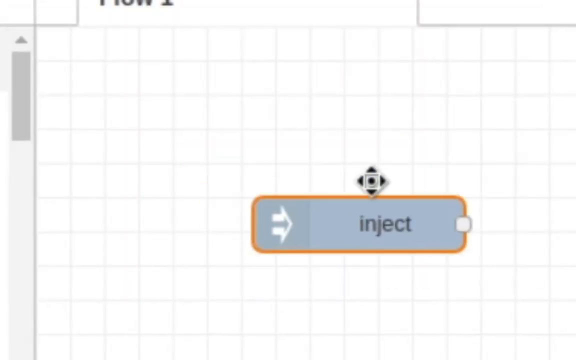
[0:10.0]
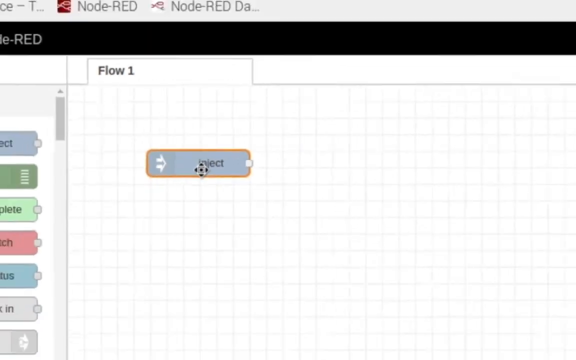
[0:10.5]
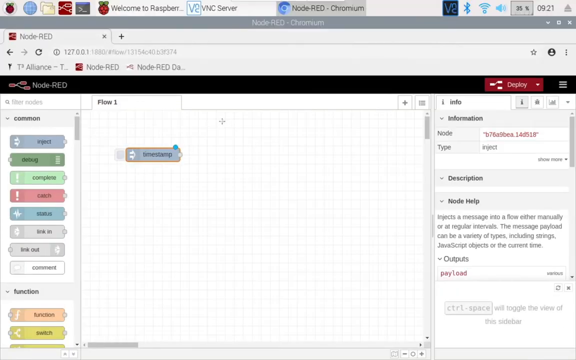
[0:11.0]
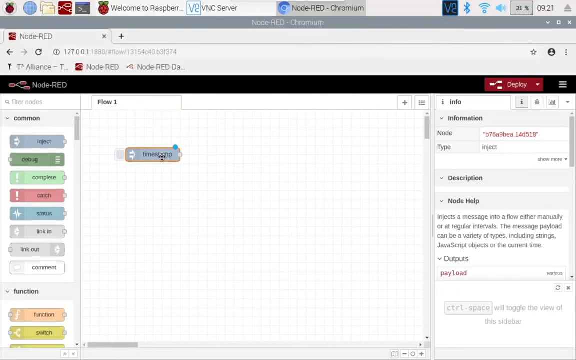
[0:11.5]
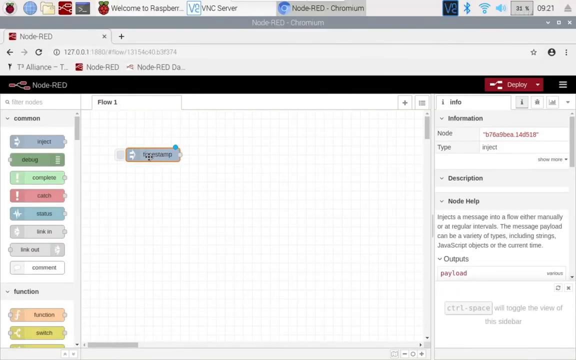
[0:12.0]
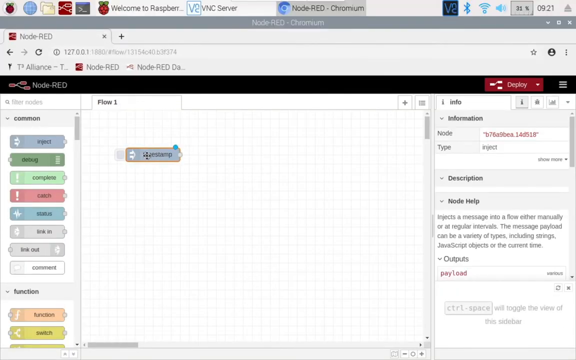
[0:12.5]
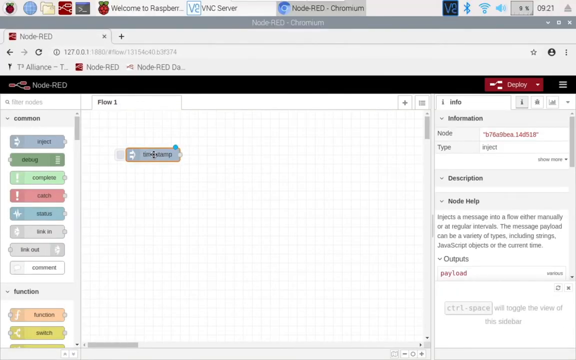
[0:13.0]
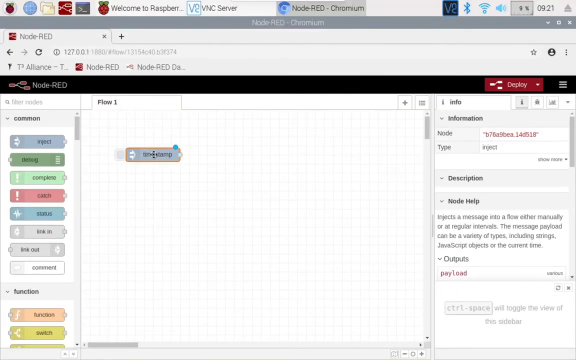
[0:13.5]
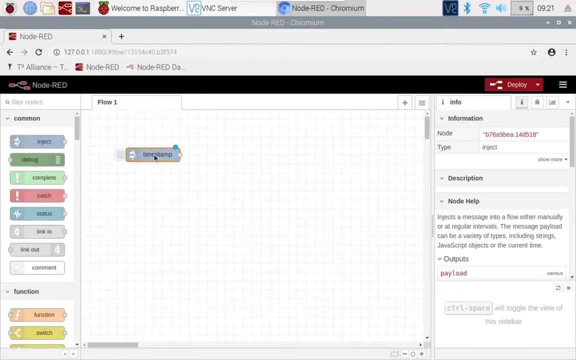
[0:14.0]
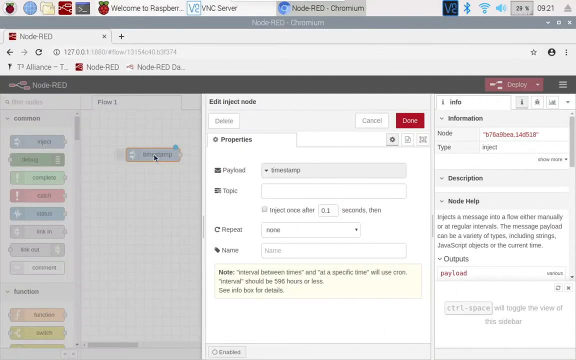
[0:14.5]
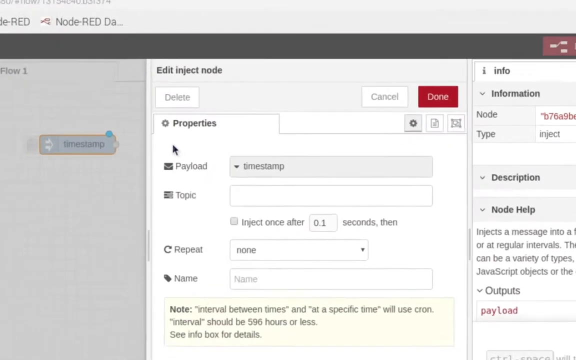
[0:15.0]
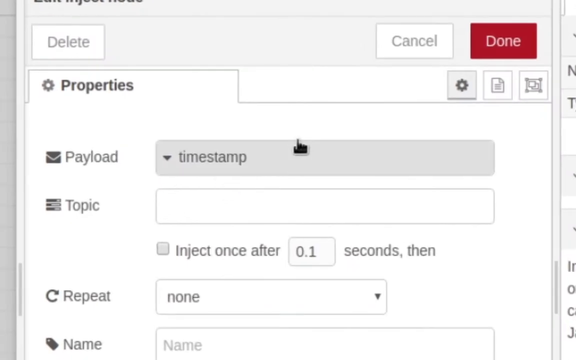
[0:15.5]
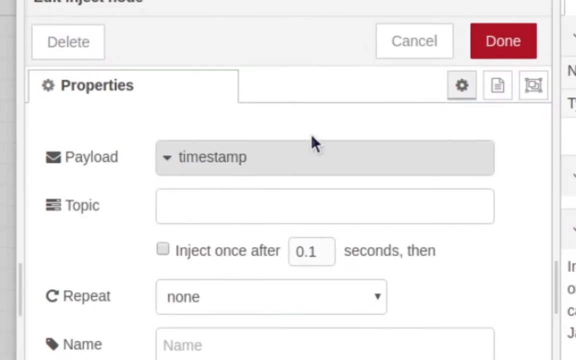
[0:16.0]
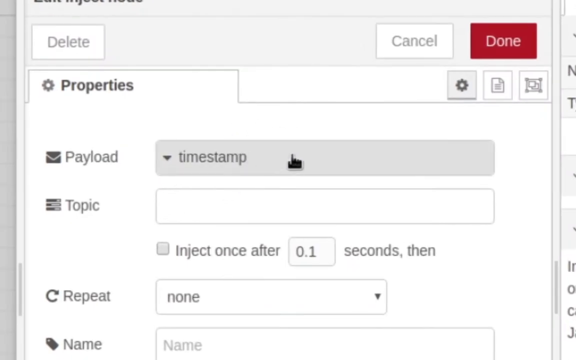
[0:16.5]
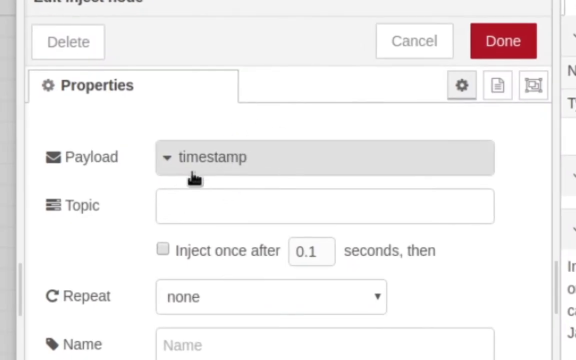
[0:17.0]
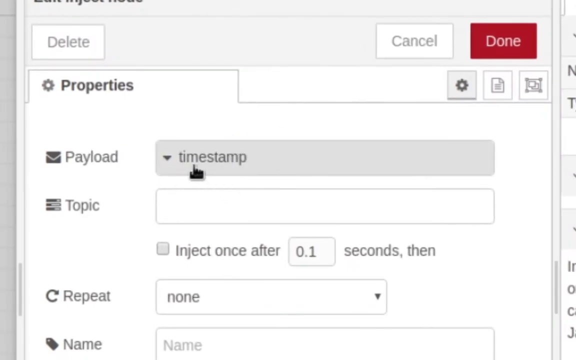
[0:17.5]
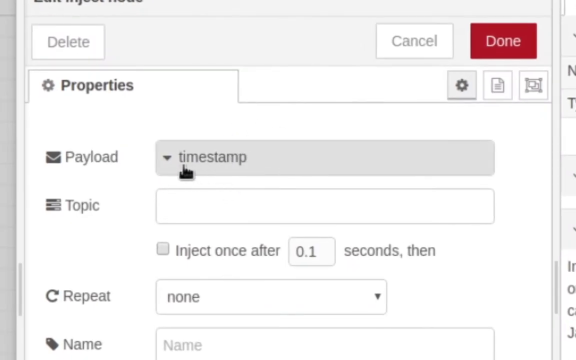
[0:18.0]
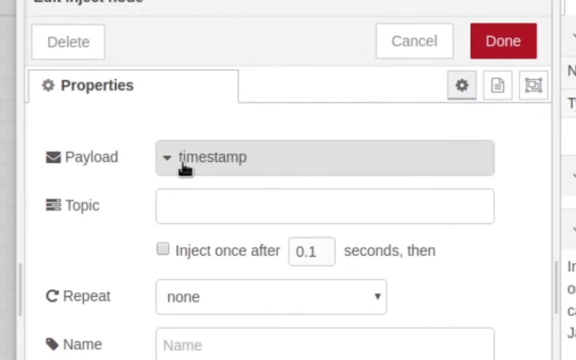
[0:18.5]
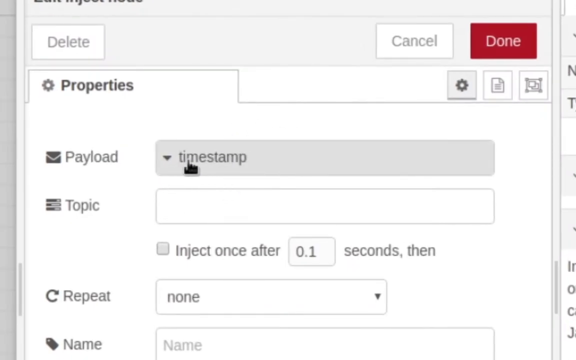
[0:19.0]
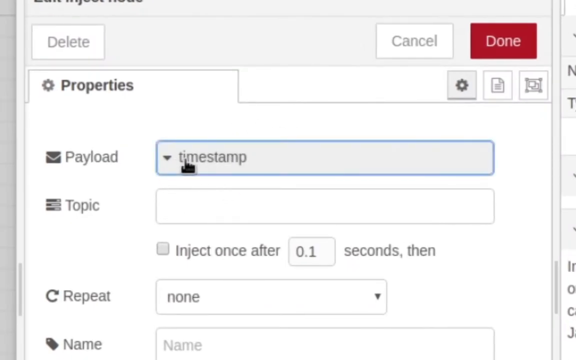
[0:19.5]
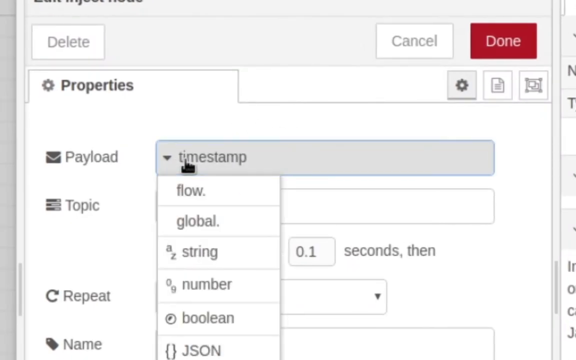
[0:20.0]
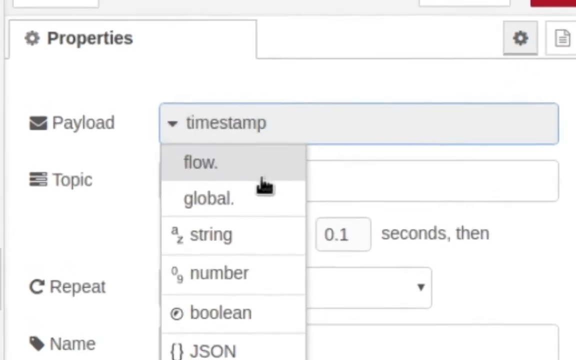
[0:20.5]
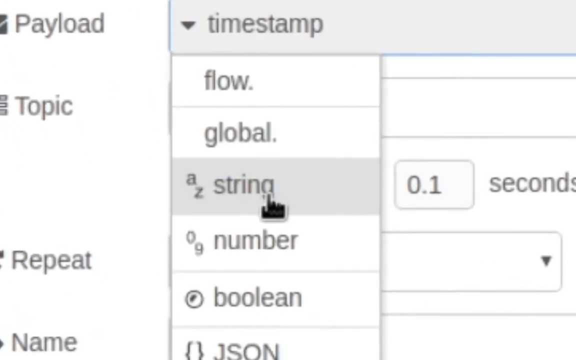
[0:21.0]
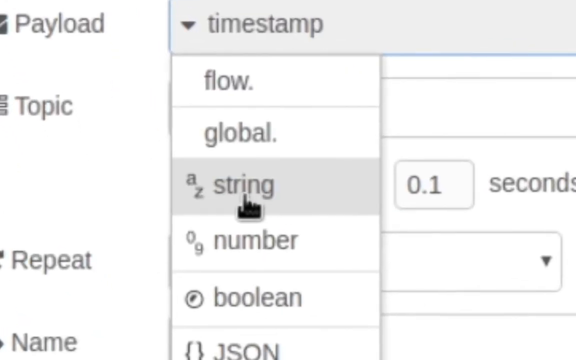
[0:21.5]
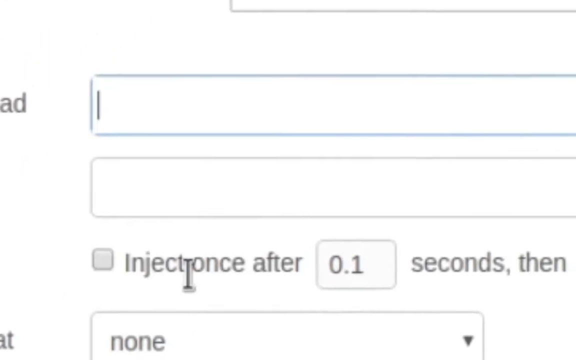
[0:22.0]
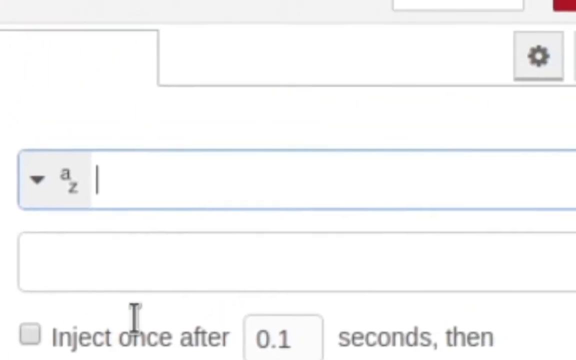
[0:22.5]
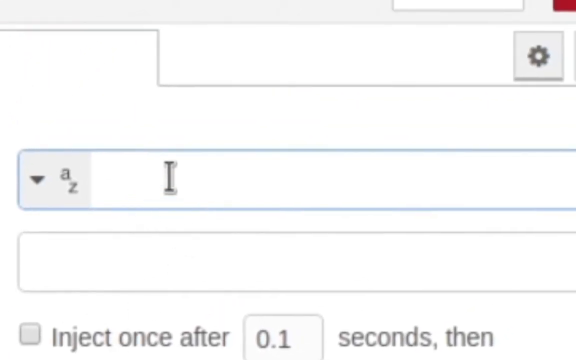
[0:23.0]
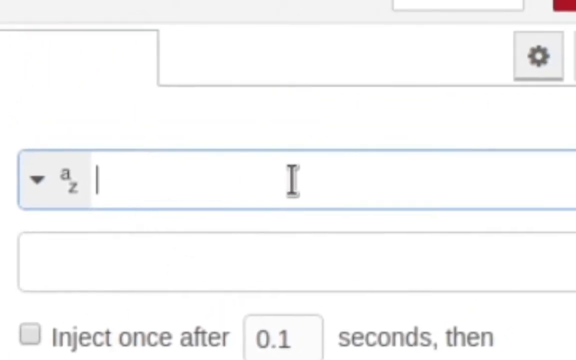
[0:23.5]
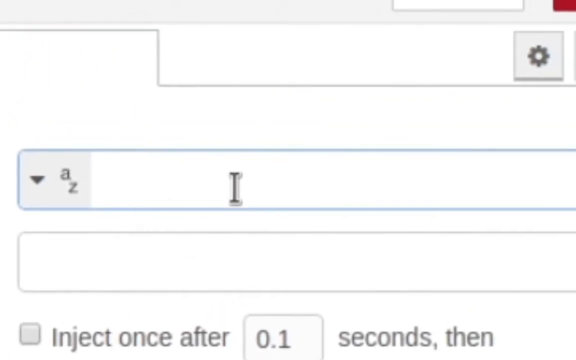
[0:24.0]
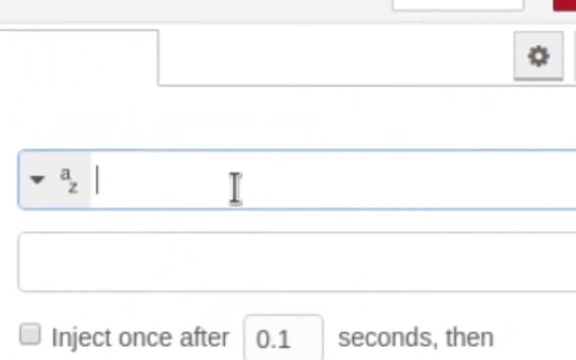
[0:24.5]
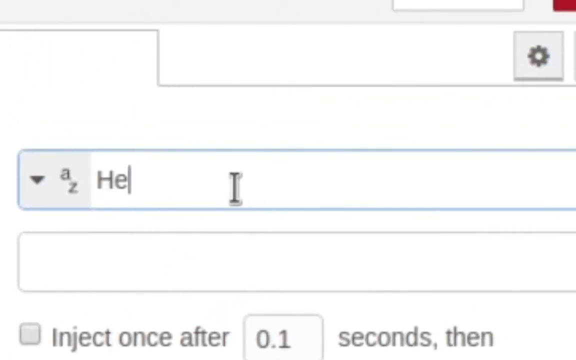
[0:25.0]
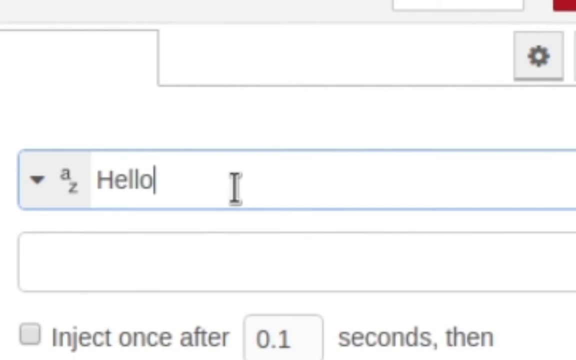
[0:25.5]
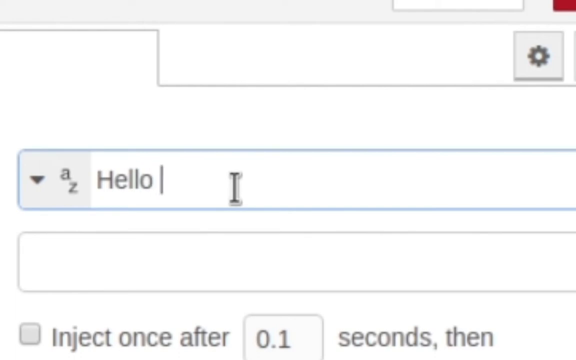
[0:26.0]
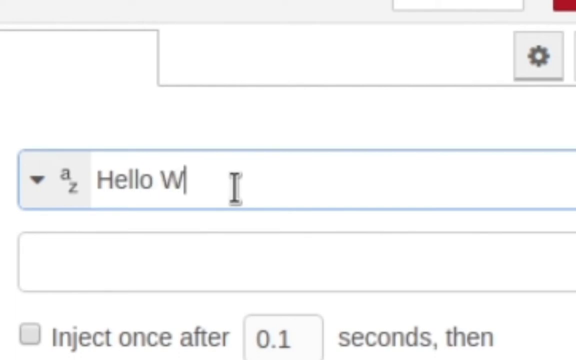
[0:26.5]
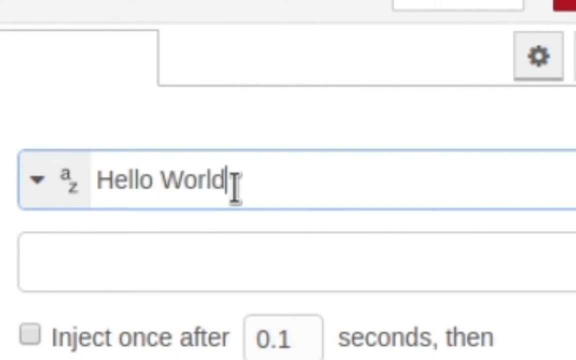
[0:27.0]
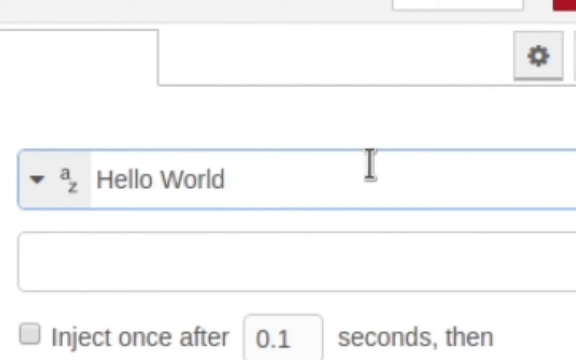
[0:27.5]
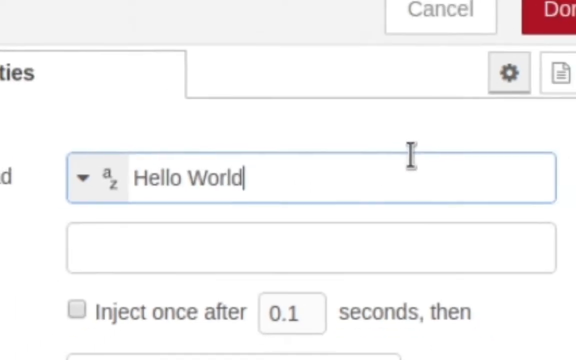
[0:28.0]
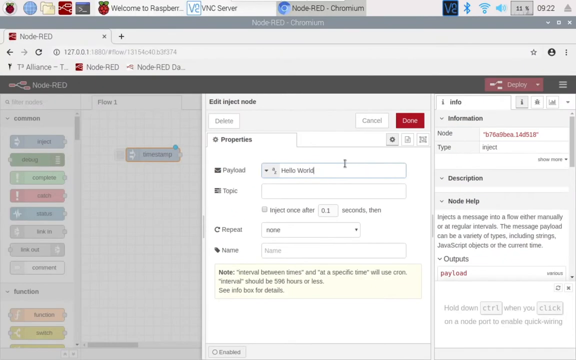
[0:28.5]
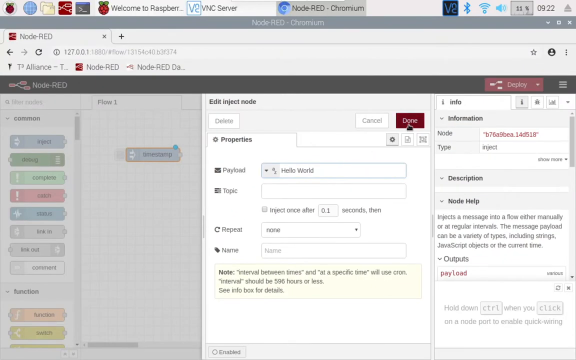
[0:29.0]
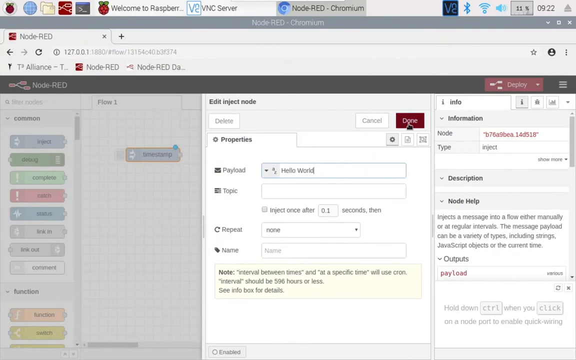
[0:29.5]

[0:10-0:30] The tutorial continues, showing how to type into the boxes and how to inject what has been typed into the box into the small columns. It gives instructions on where to go, what to tick, and how to inject the typed content into the column. The wording in the document is clear, and it is used for office work. There is no movement, and the person explaining the tutorial is not visible; only what is being explained and how to do it appears on screen.